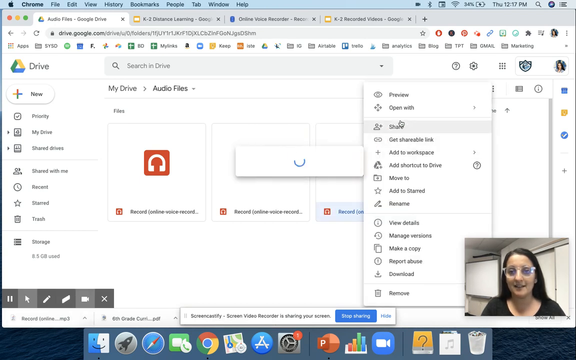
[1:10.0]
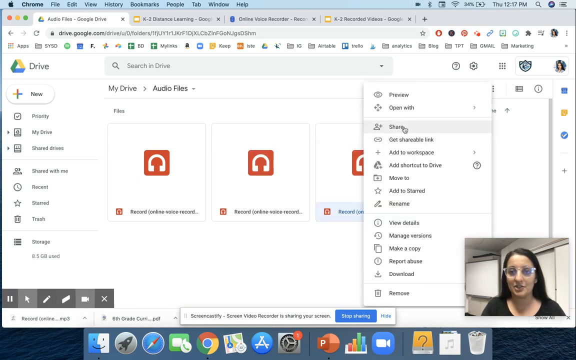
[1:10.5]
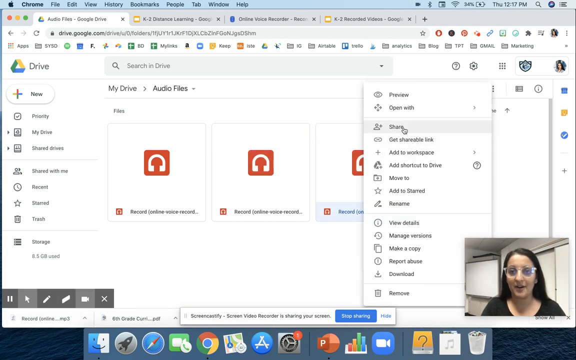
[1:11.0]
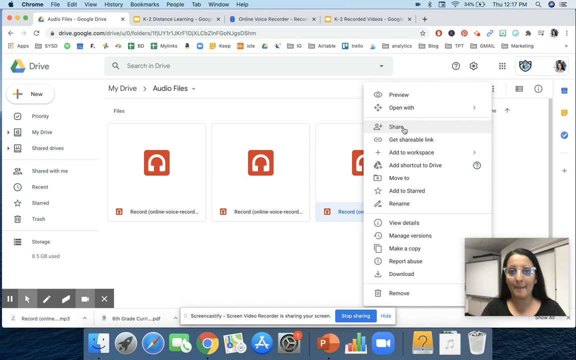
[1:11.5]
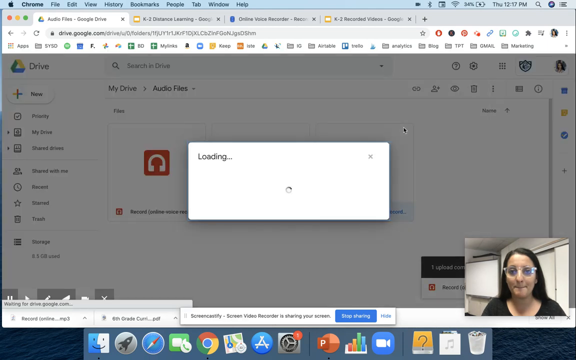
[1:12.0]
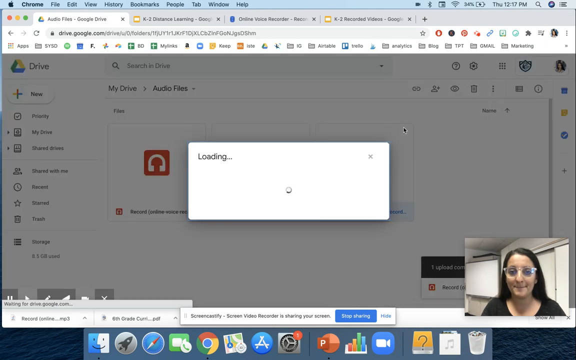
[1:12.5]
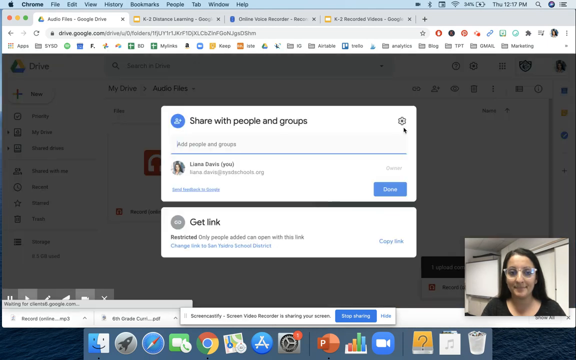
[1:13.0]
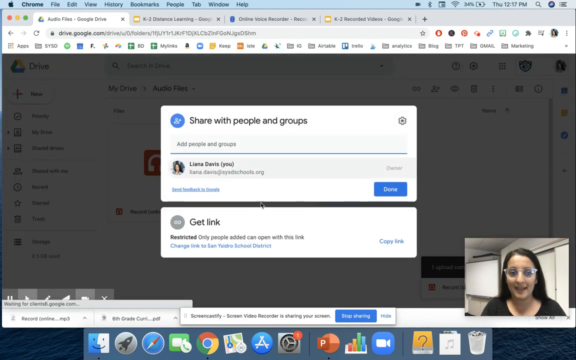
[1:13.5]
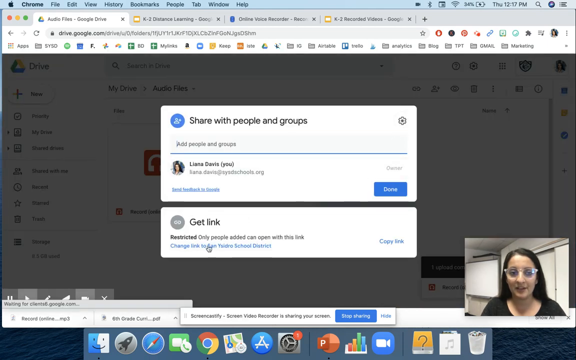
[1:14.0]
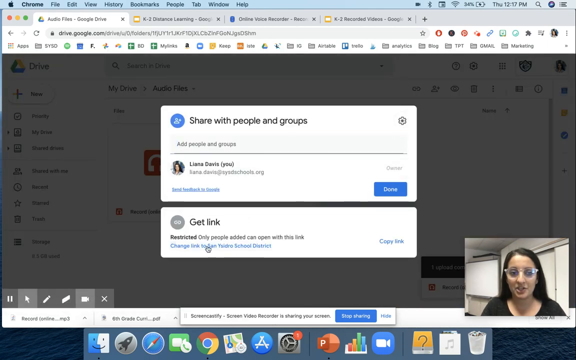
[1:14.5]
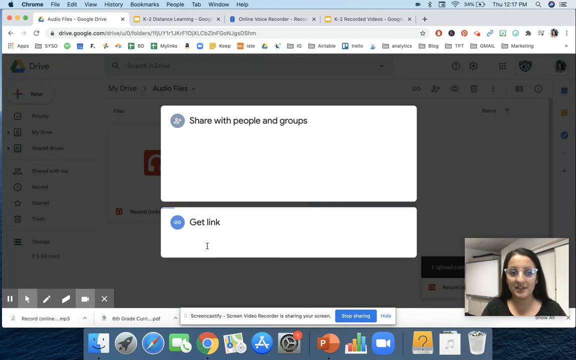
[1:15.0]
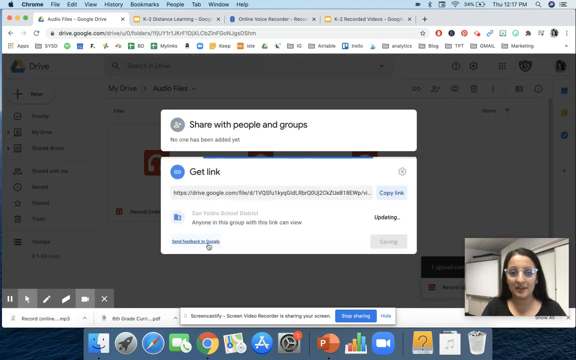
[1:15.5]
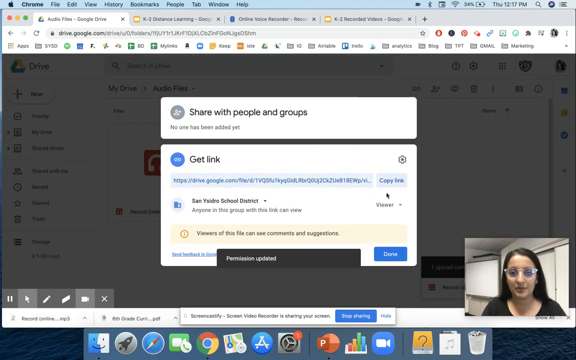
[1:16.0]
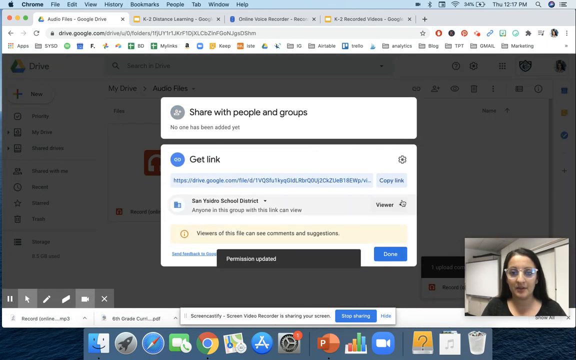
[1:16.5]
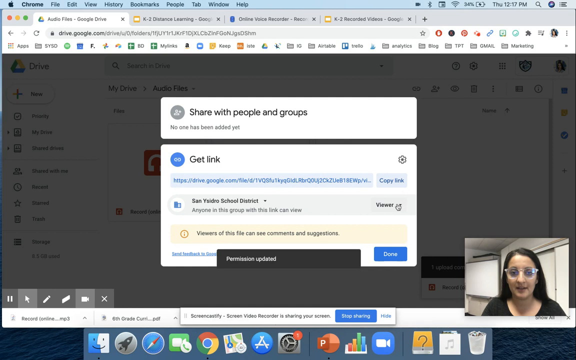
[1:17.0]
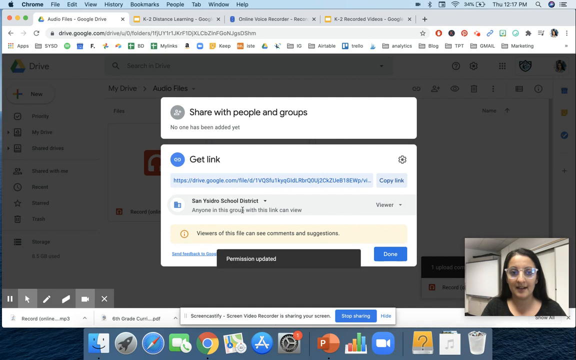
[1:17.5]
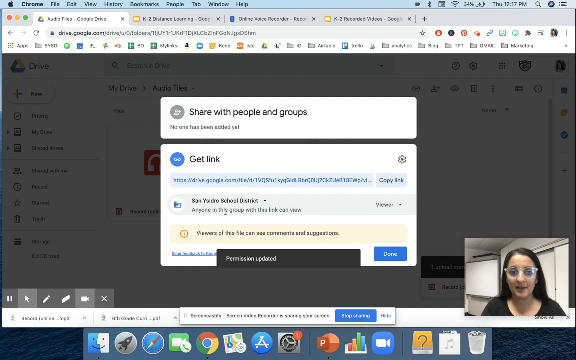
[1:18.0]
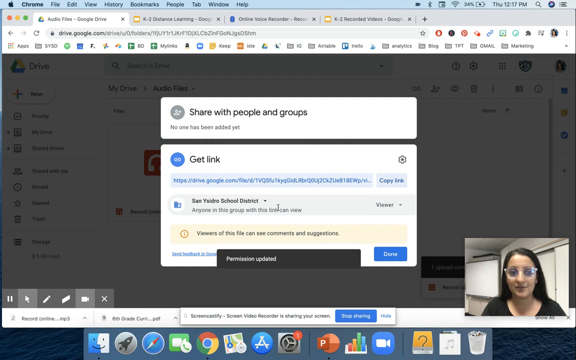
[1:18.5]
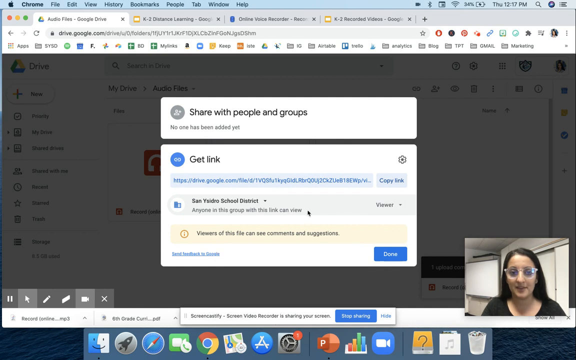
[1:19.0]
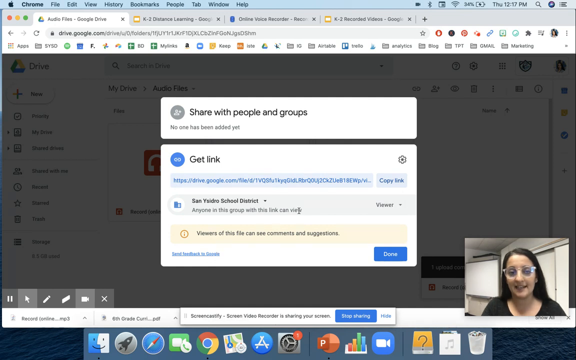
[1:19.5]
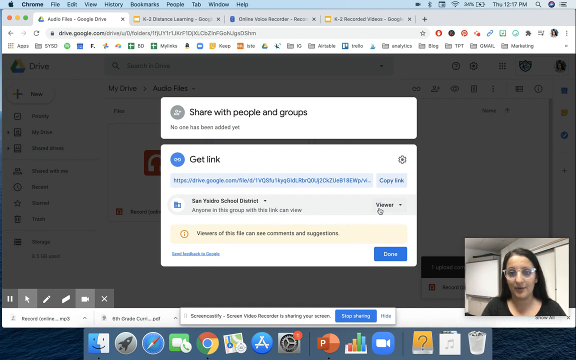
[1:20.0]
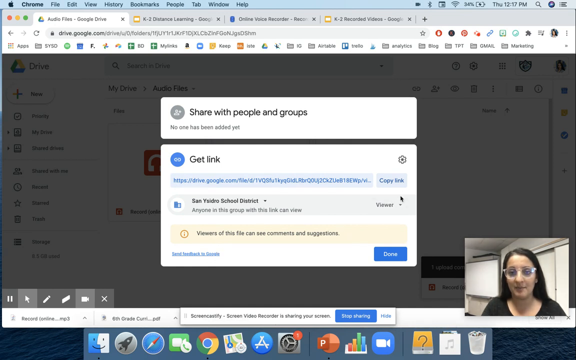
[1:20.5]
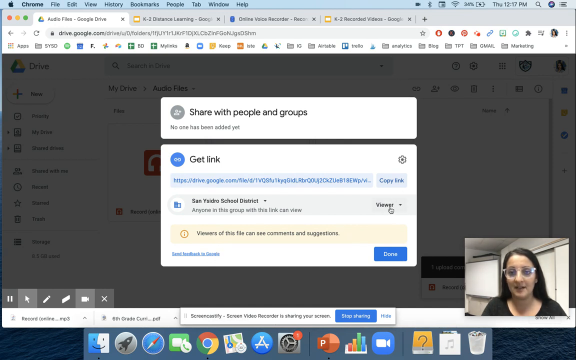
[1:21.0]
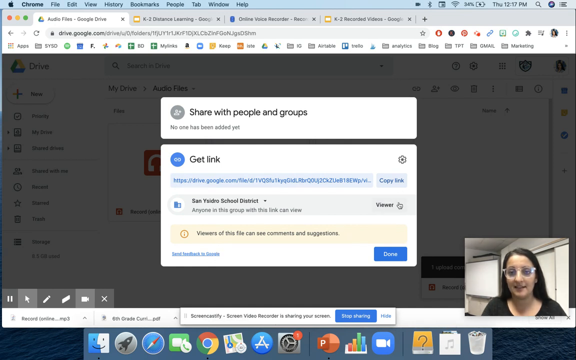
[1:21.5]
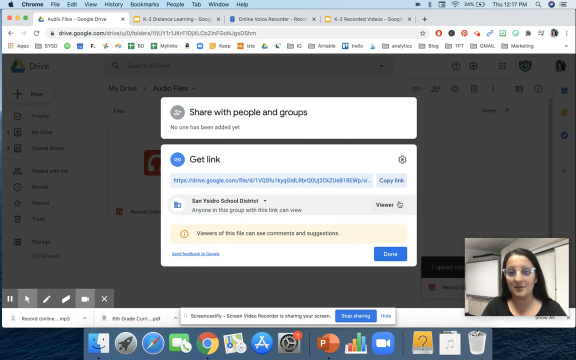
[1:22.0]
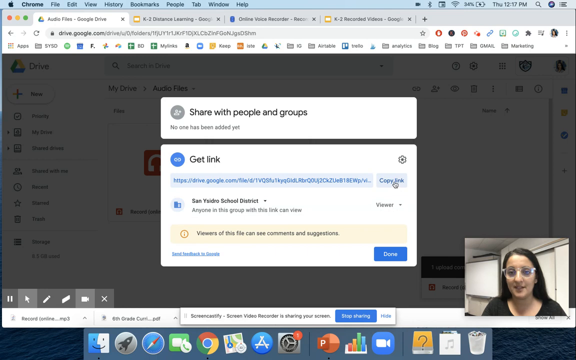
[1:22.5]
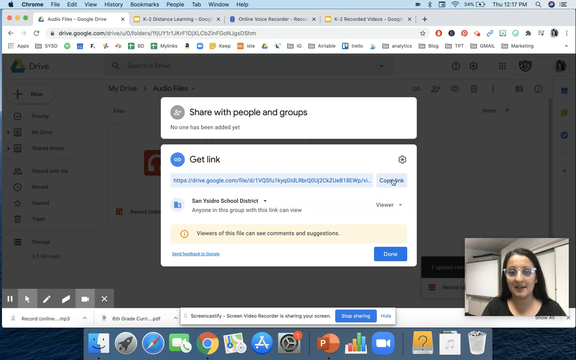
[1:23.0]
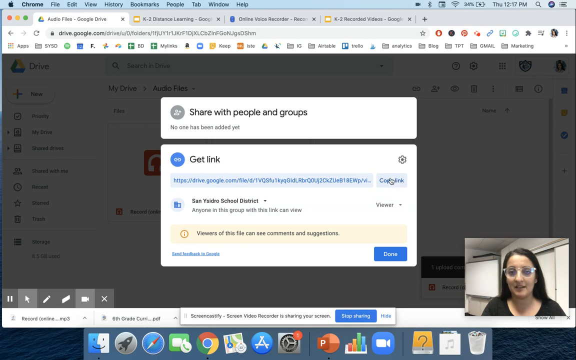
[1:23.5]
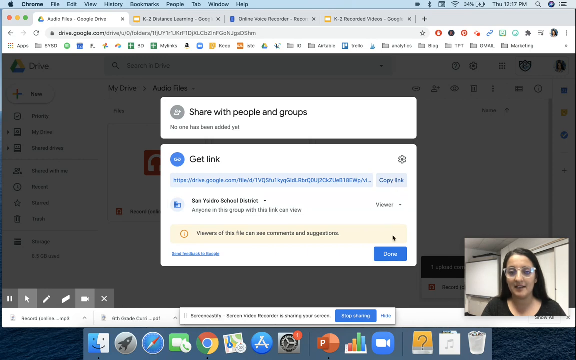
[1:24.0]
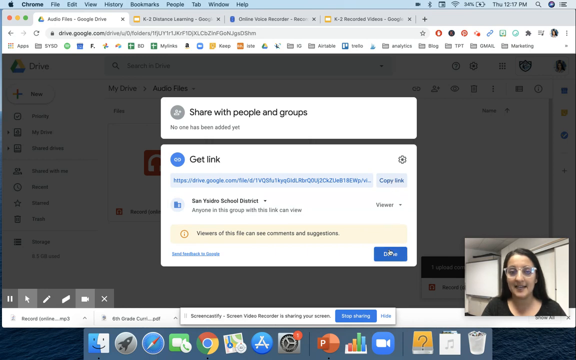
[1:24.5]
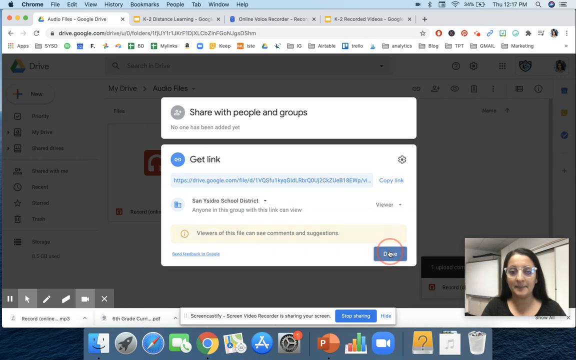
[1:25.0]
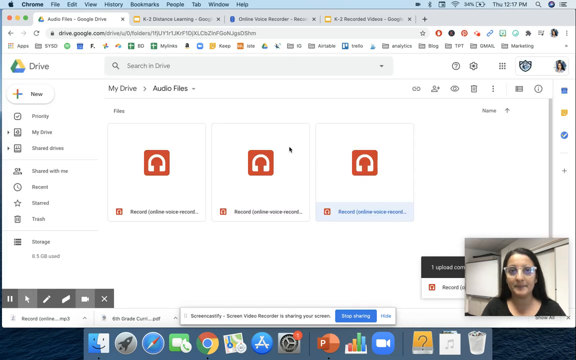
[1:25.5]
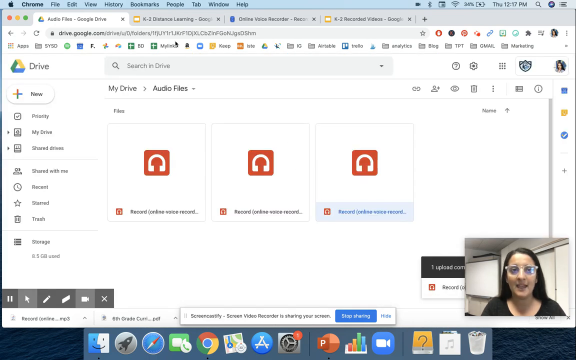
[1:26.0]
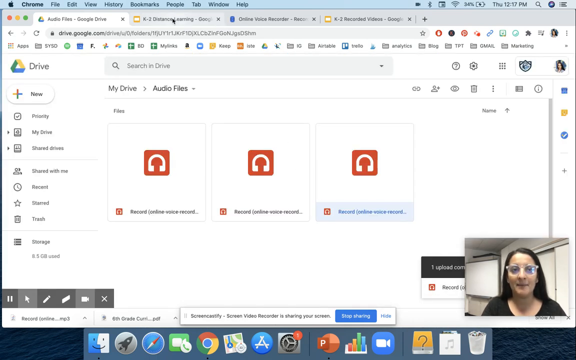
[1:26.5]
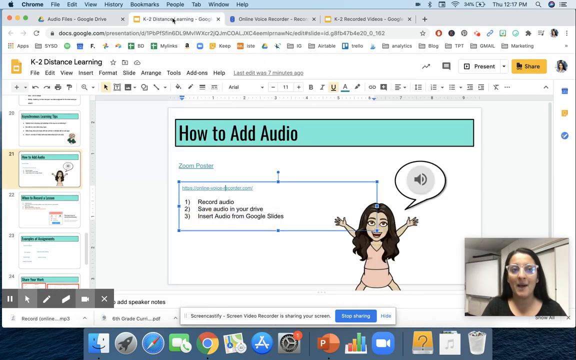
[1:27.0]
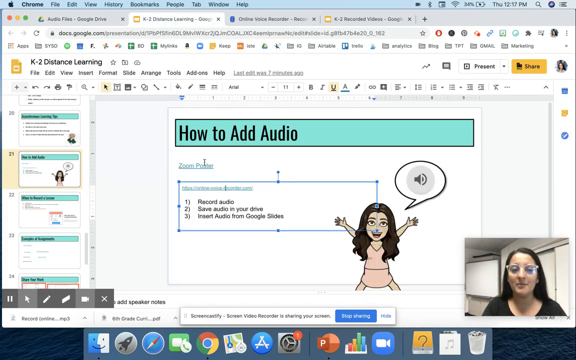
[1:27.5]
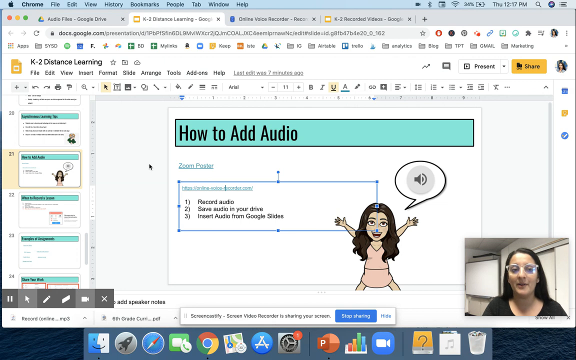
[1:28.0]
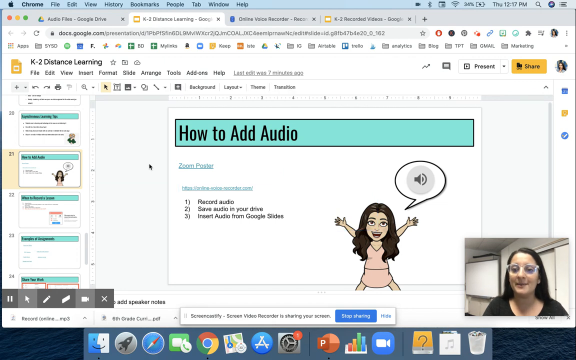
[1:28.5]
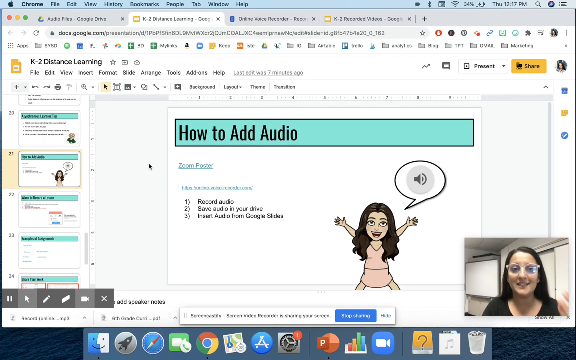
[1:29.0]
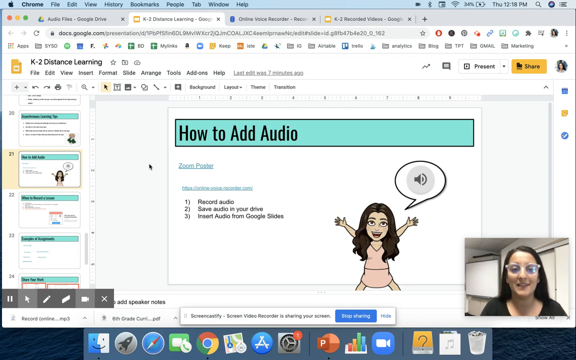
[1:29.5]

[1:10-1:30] In the Google Drive folder under My Drive and Audio Files, where an audio file has just been added, the teacher navigates with the mouse, right-clicks the new audio file, and clicks on share. A window to share with people and groups pops up within Google Drive, showing a "get link" subtitle and an "add people and groups" bar for typing in people. Liana Davis is listed as the person navigating this Google Drive, presumably the teacher. She clicks on get link, hovers over a section called "San Ysidro School District," then over a section with a drop-down menu reading "Viewer," then hovers above copy link, clicks OK, and goes back into the presentation about how to add audio.